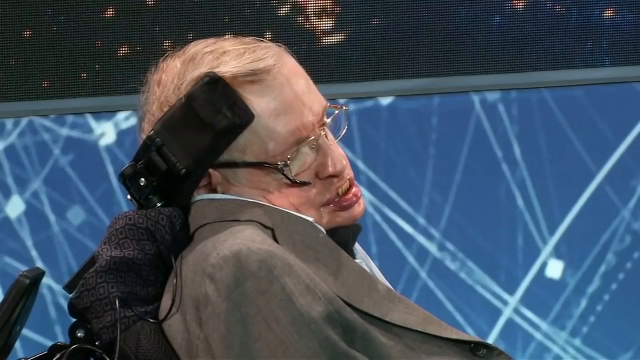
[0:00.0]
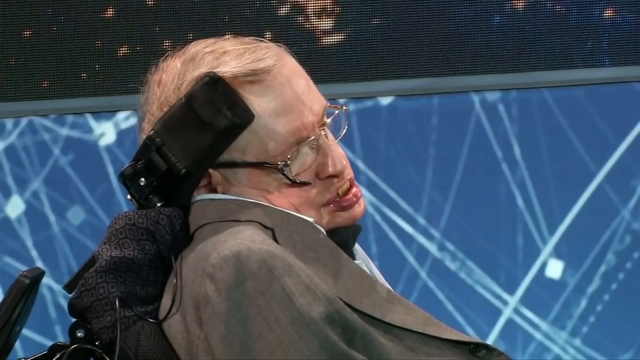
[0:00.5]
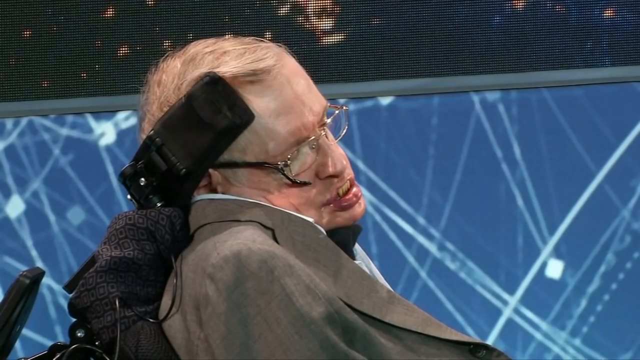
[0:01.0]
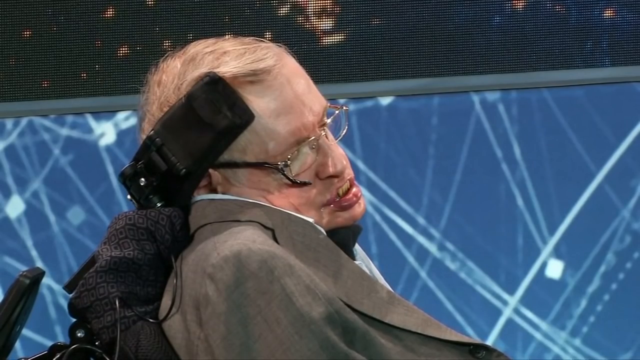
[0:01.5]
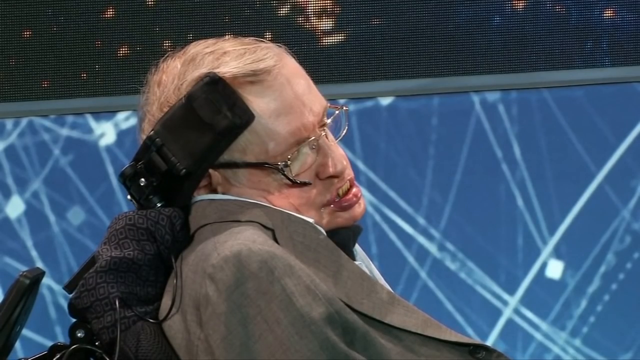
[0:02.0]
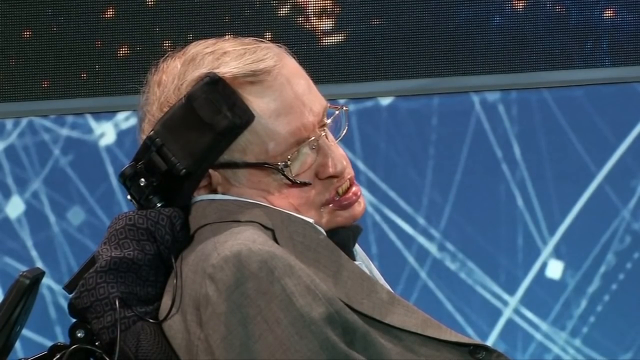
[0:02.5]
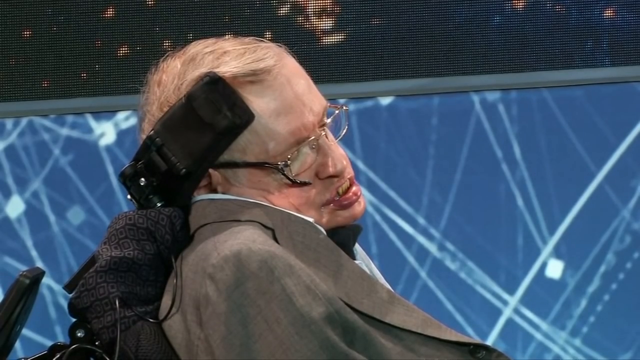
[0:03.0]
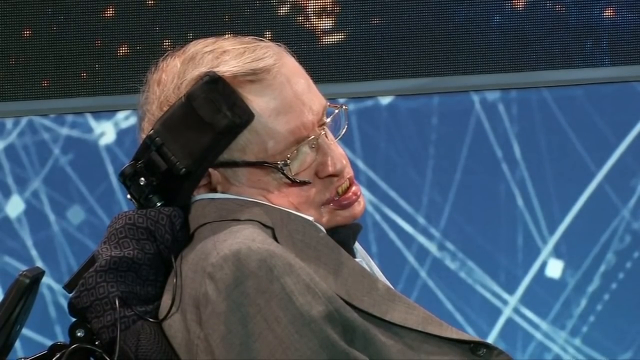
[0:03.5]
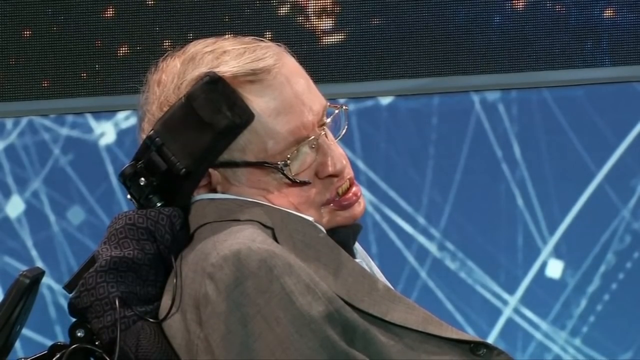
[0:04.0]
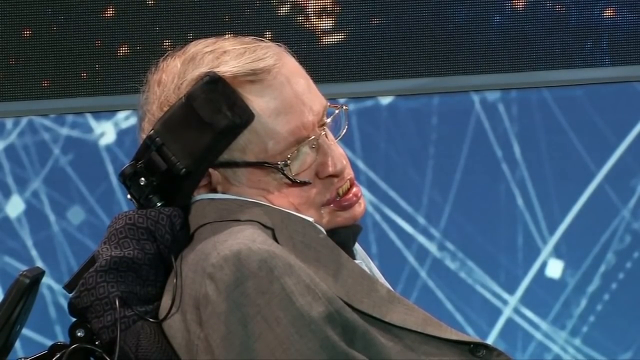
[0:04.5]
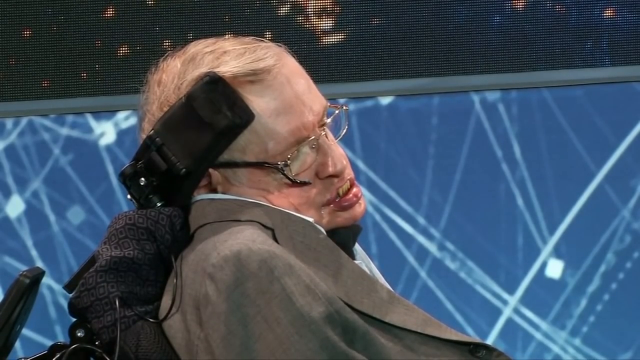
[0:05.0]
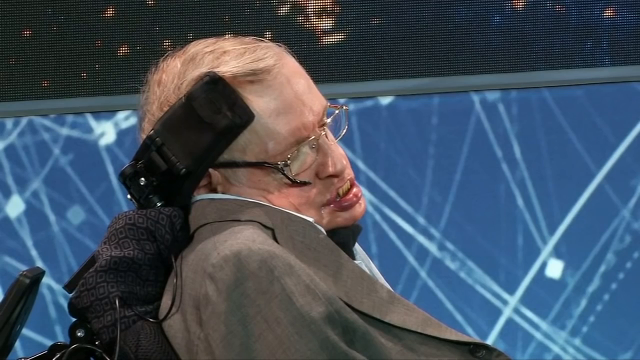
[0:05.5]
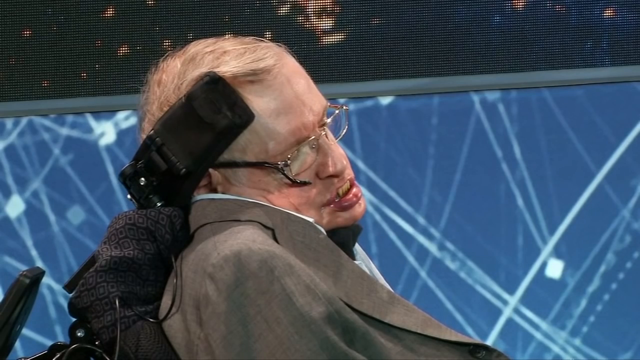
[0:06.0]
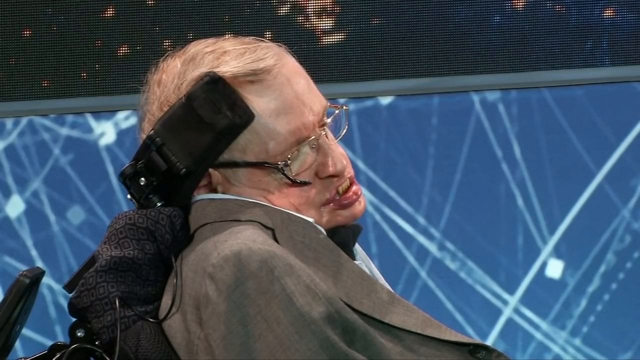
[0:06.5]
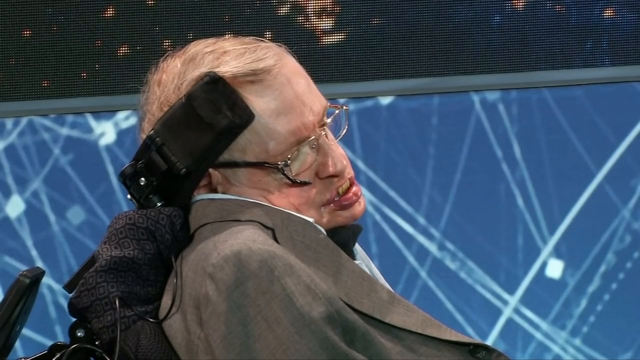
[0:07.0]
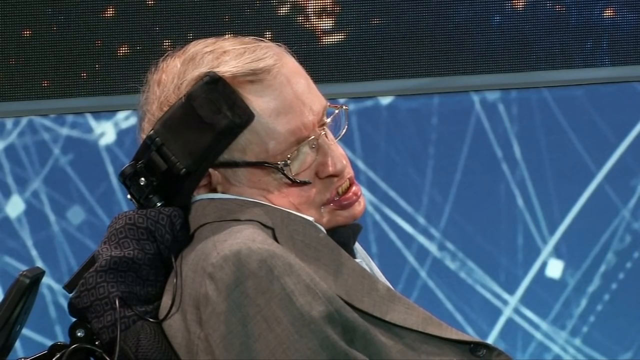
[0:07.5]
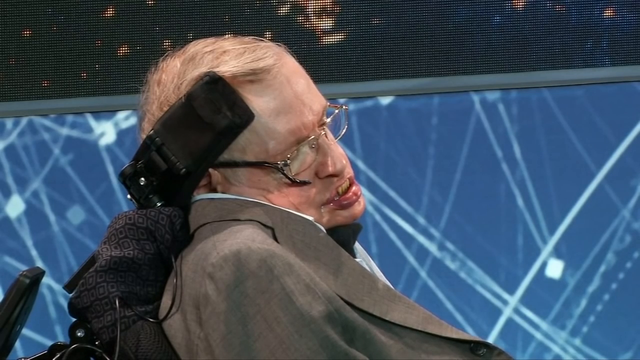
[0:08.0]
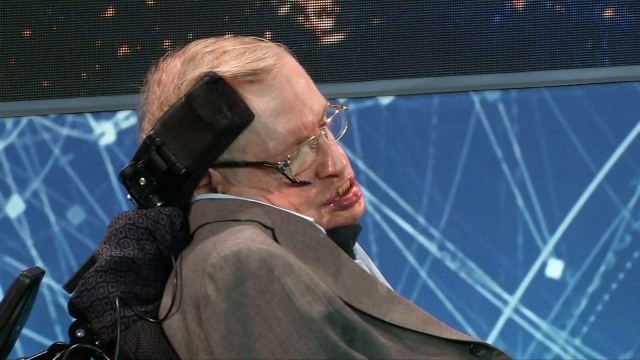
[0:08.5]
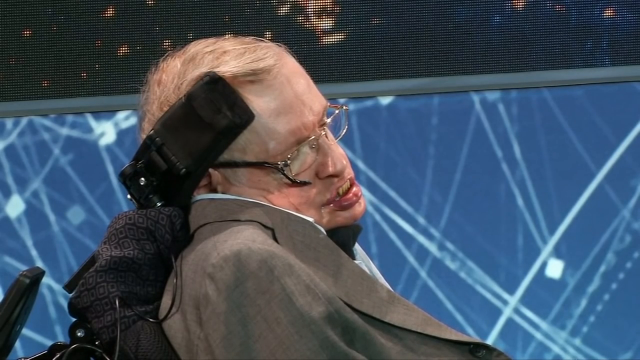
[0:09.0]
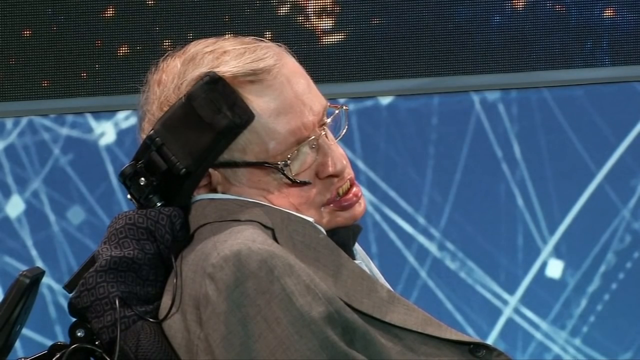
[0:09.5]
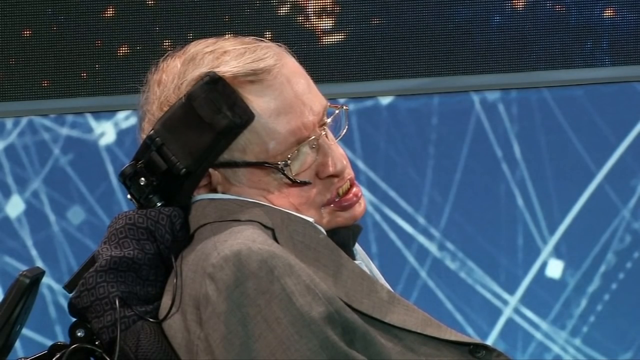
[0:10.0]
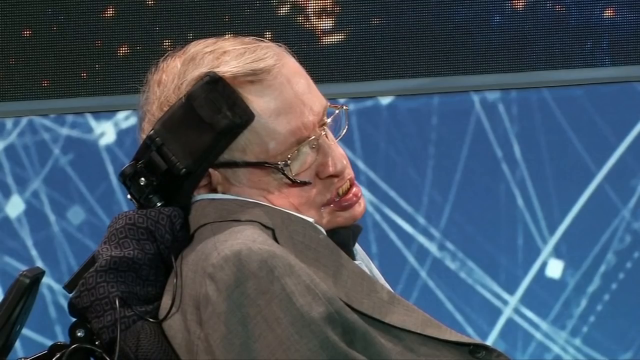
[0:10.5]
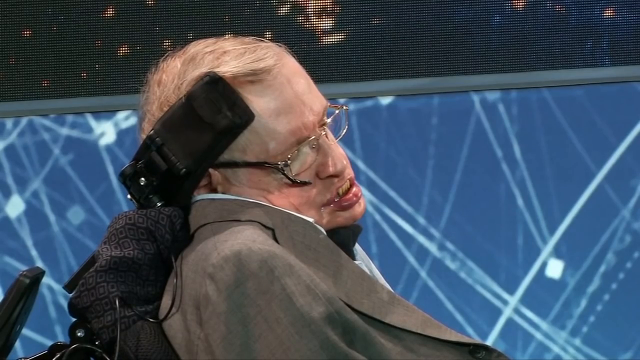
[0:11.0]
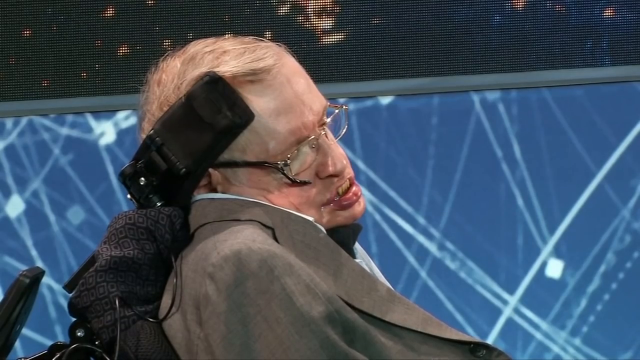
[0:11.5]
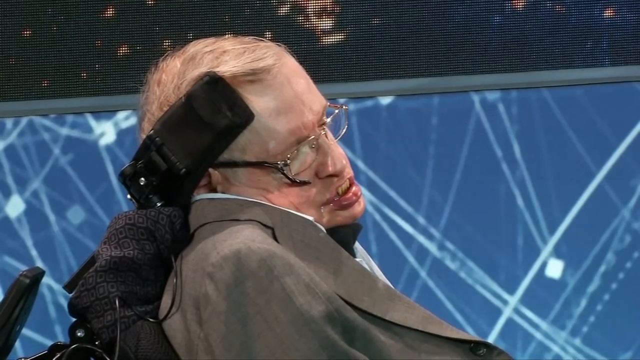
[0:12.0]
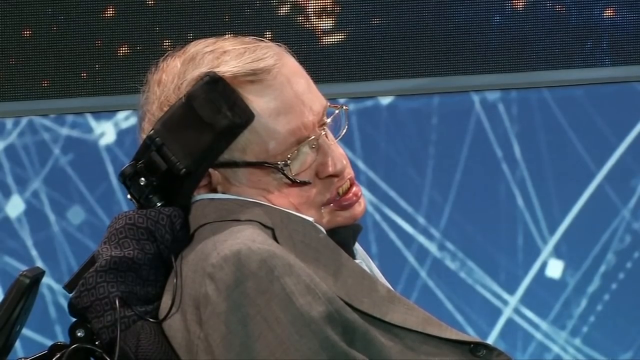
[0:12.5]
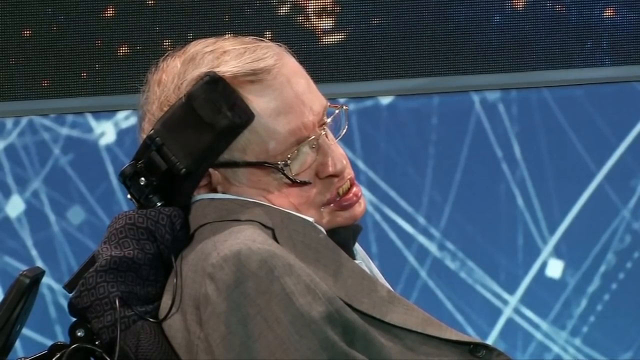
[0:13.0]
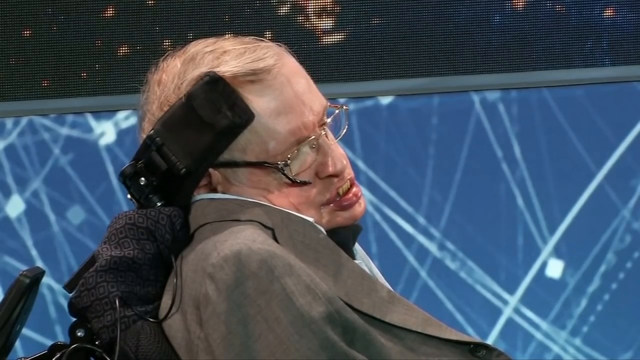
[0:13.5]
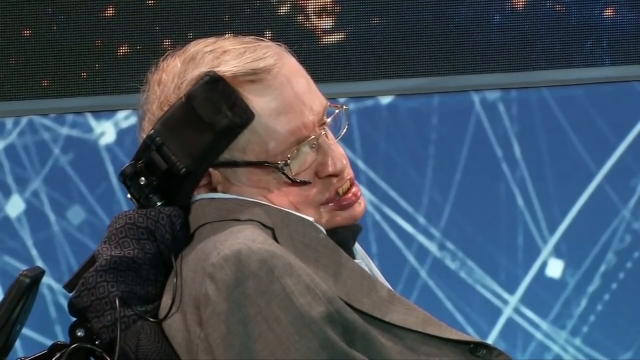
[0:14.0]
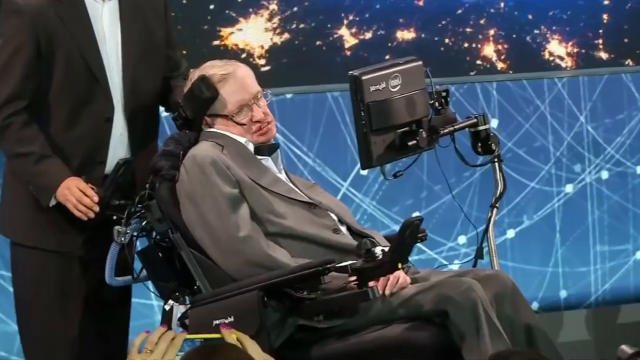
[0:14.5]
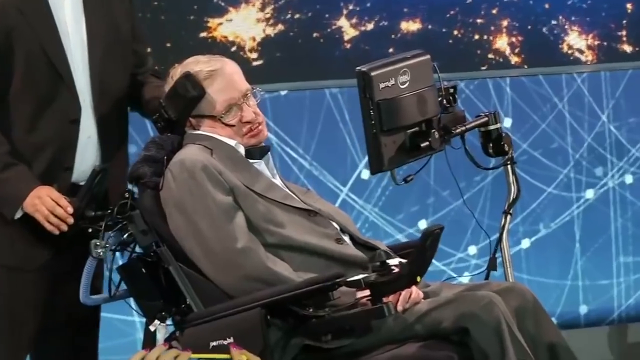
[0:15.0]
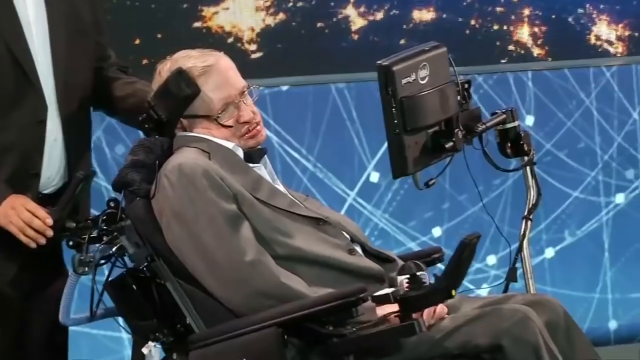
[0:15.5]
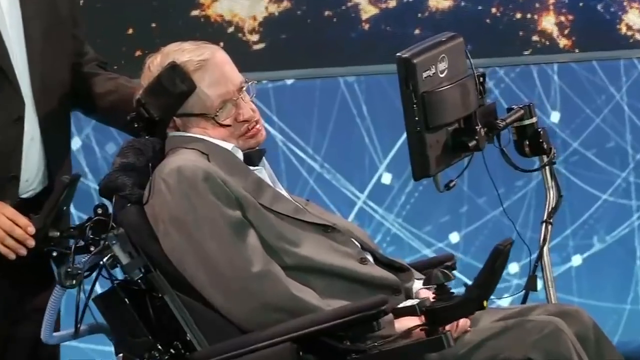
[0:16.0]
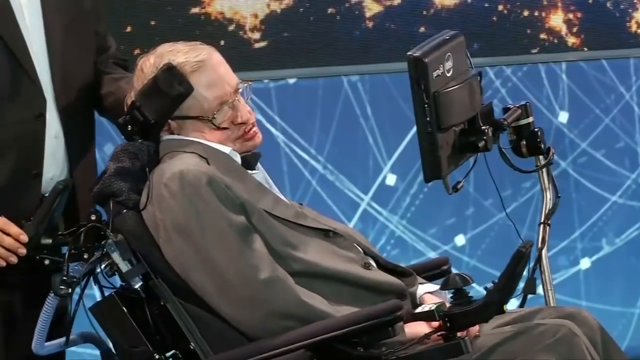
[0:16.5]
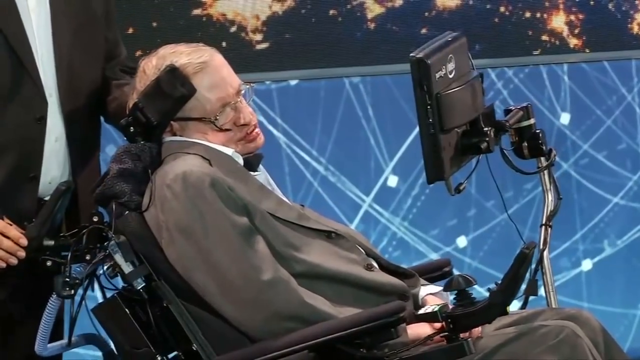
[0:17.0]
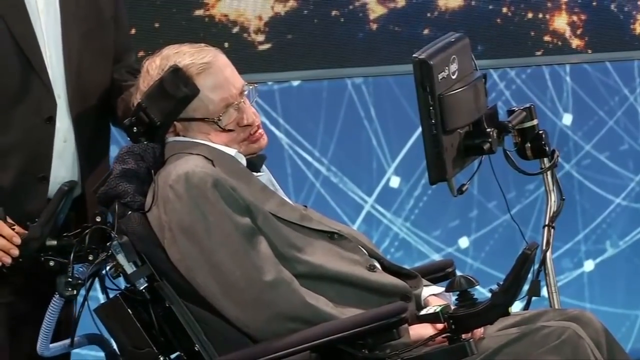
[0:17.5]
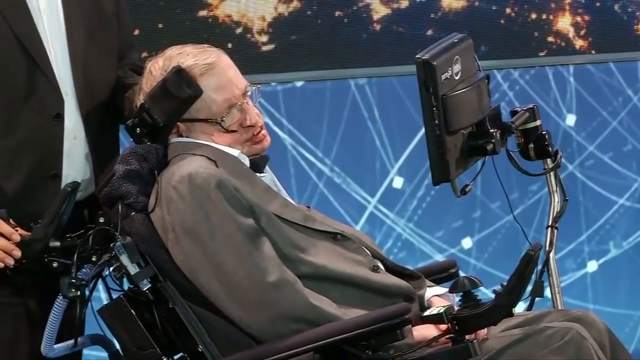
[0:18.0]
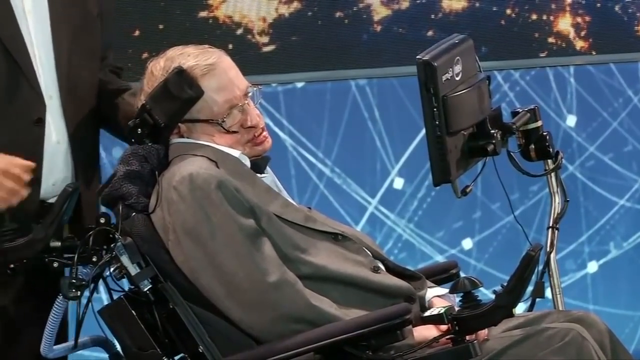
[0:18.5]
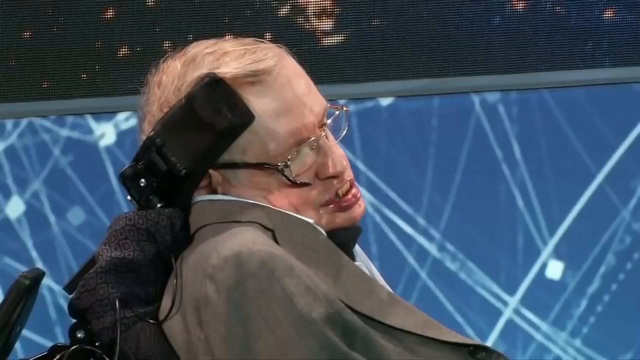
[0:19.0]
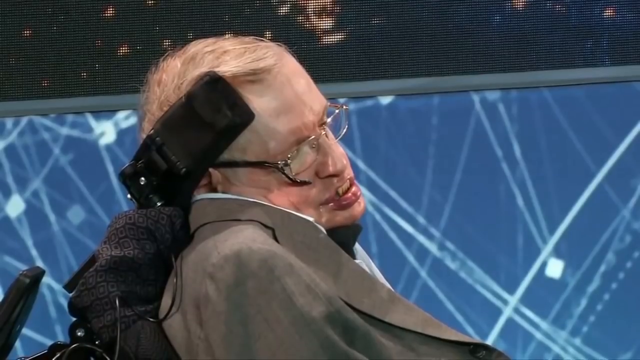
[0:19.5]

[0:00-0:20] A close-up shows the physicist Stephen Hawking sitting in his mobility chair. The camera zooms out as somebody wheels the chair around, revealing more of him. He wears a grey suit and a white shirt; his head is supported, and a screen attached to a metal pole is in front of him. The man pushing or turning his chair wears a black suit and a white shirt. Hawking appears to be on a stage or at some formal conference. The background looks a bit like space: it is black with what look like stars and other lines that look sort of scientific or spacey.